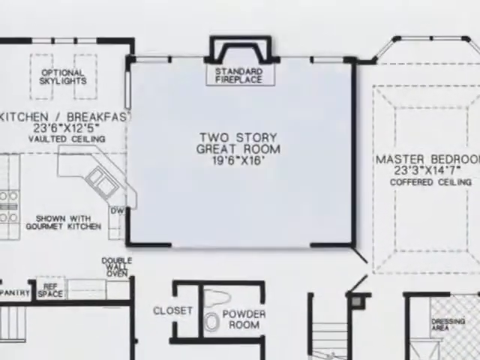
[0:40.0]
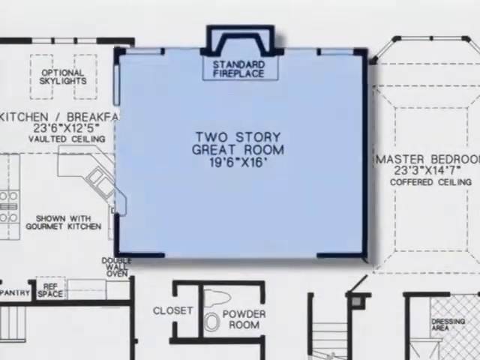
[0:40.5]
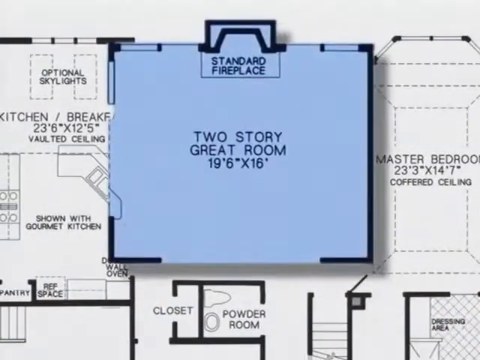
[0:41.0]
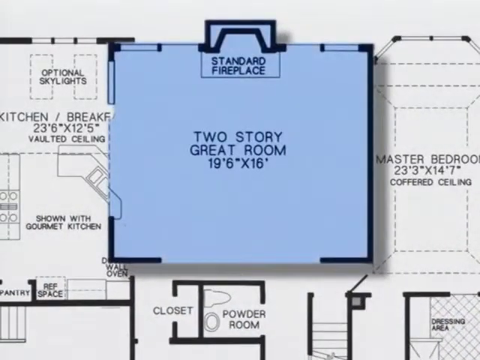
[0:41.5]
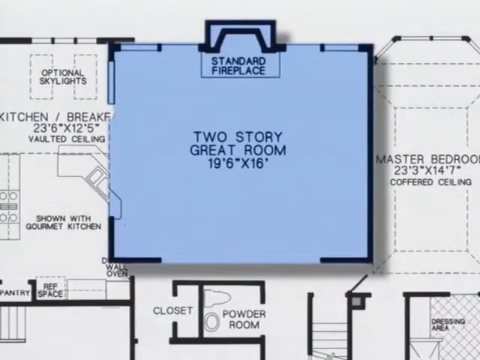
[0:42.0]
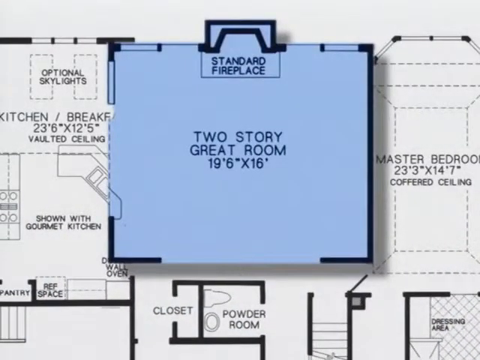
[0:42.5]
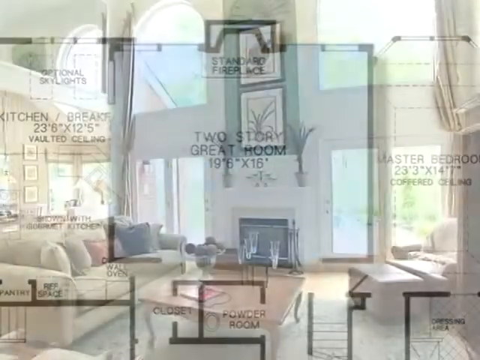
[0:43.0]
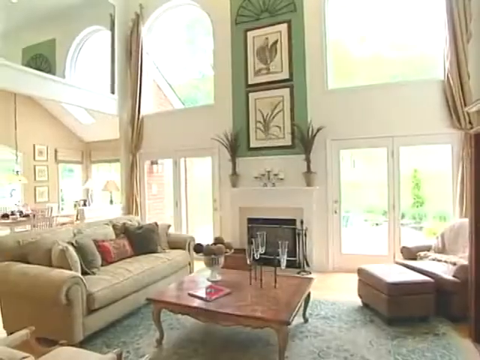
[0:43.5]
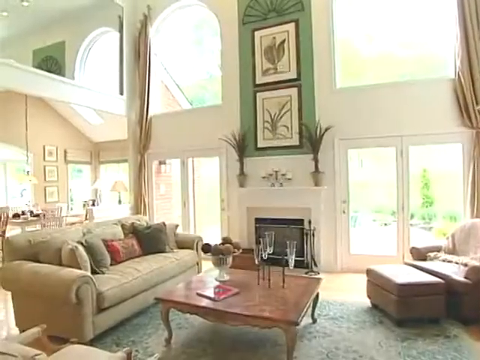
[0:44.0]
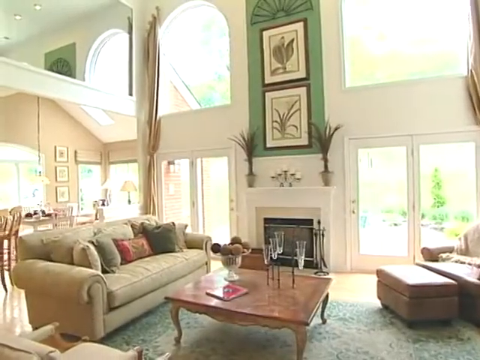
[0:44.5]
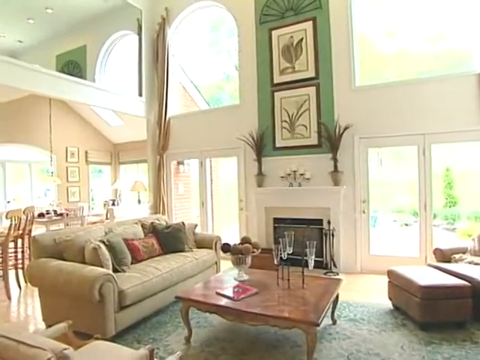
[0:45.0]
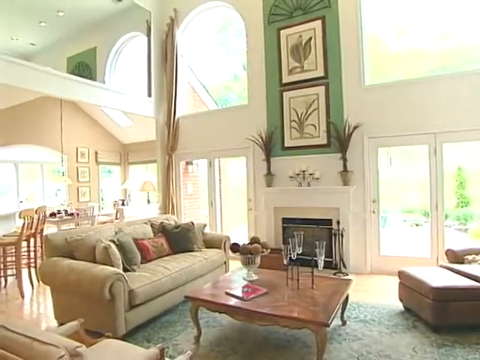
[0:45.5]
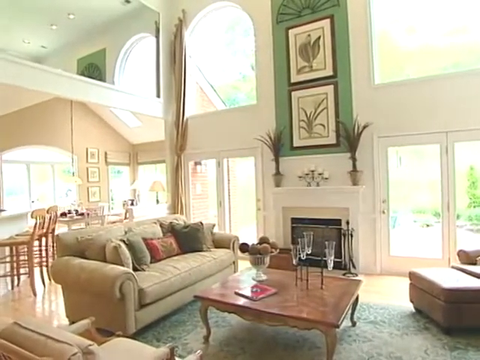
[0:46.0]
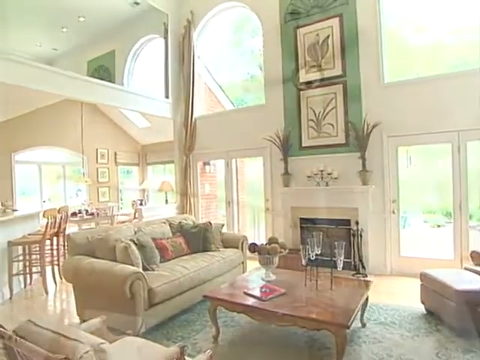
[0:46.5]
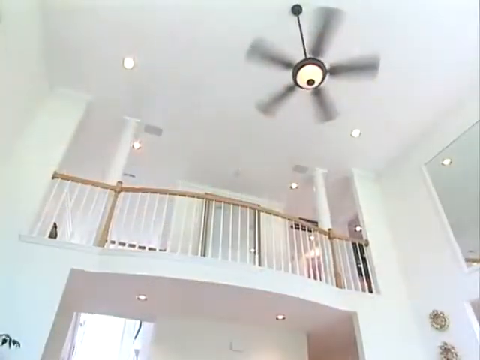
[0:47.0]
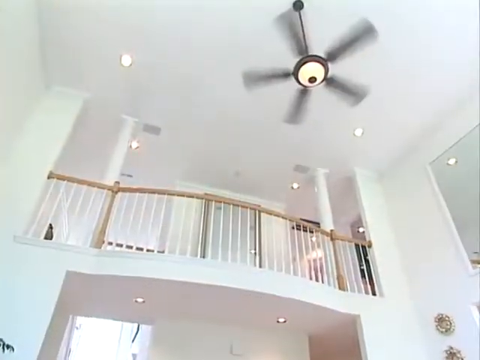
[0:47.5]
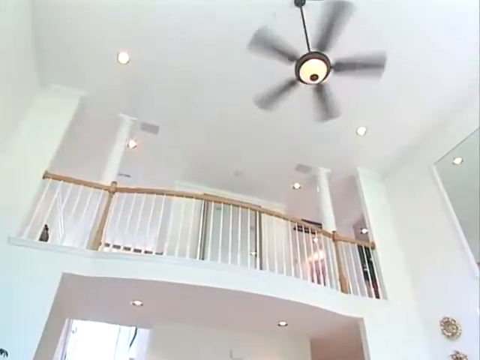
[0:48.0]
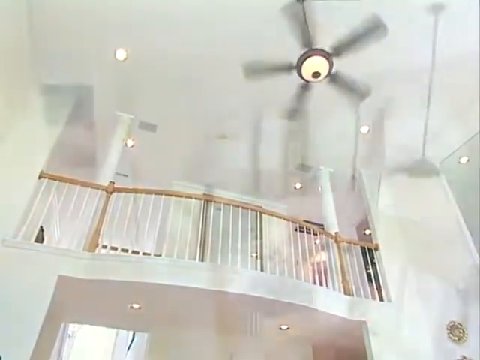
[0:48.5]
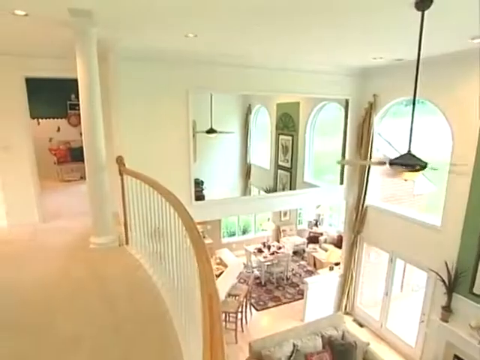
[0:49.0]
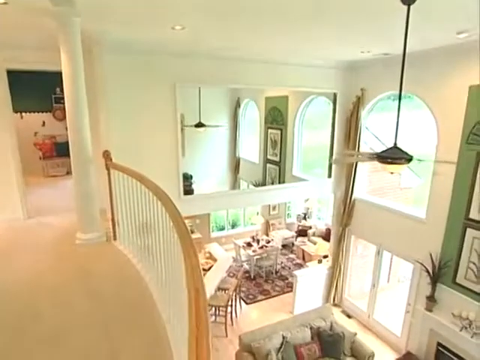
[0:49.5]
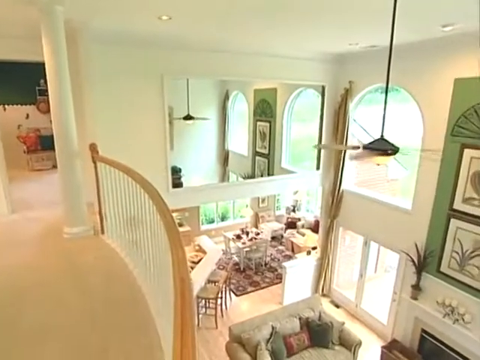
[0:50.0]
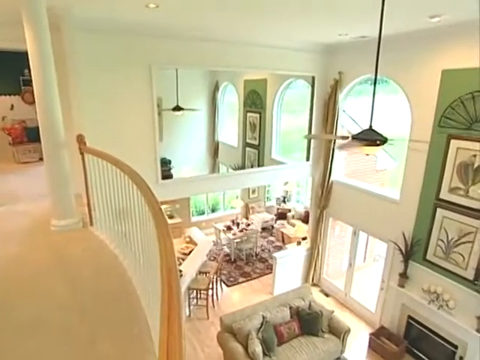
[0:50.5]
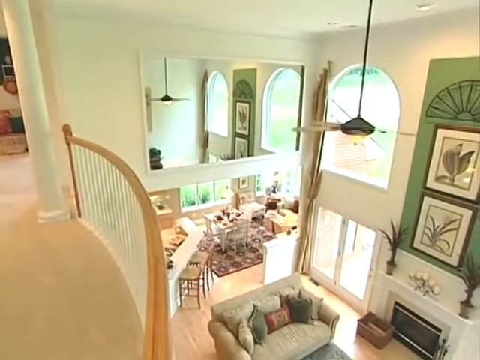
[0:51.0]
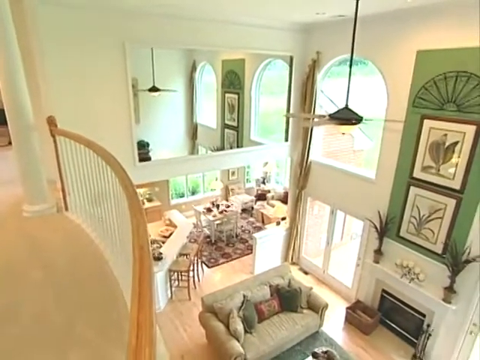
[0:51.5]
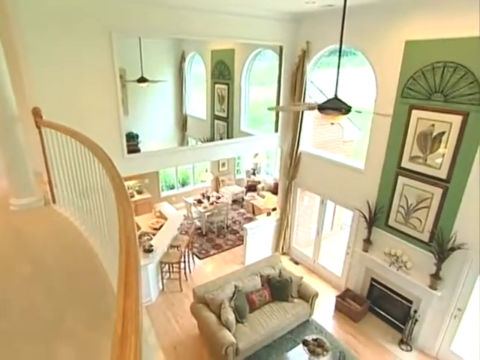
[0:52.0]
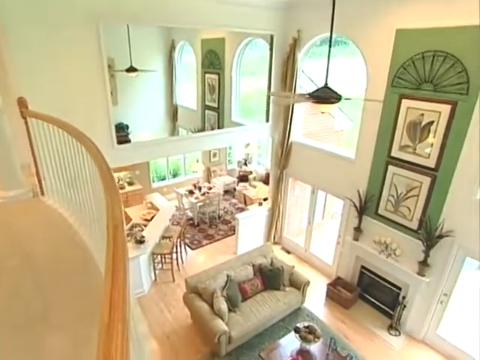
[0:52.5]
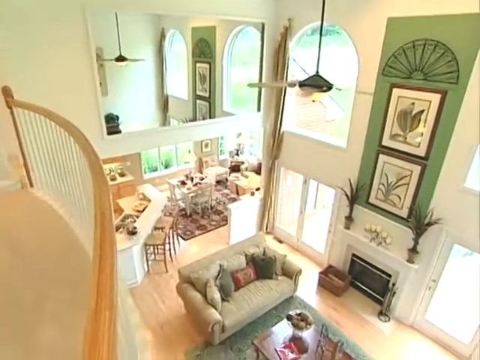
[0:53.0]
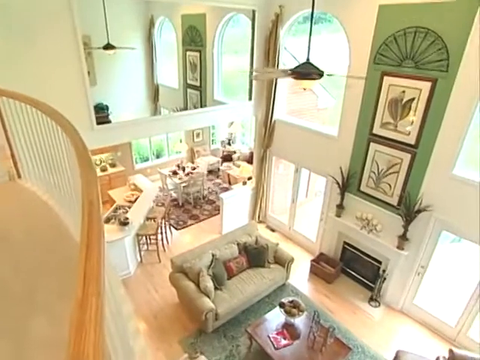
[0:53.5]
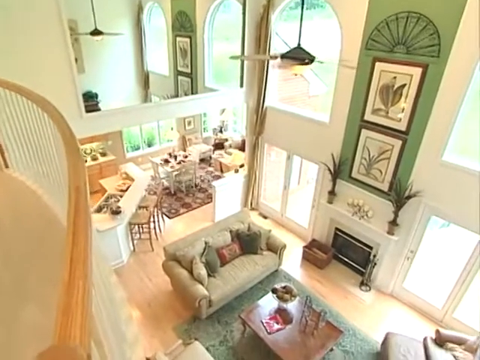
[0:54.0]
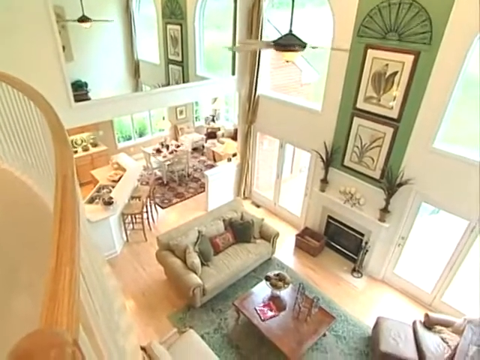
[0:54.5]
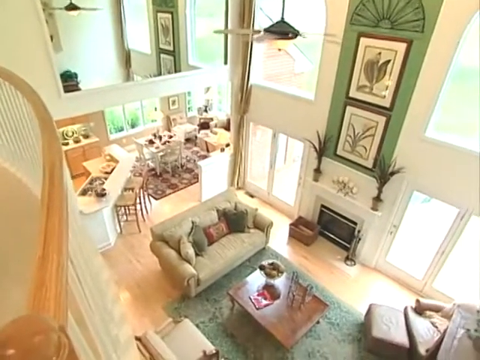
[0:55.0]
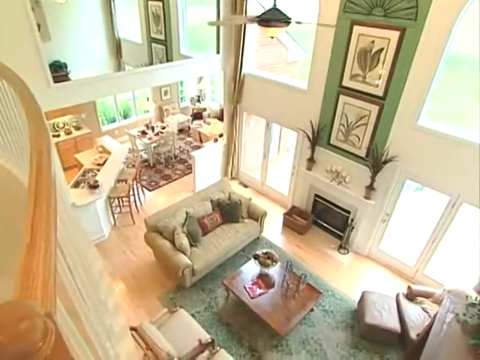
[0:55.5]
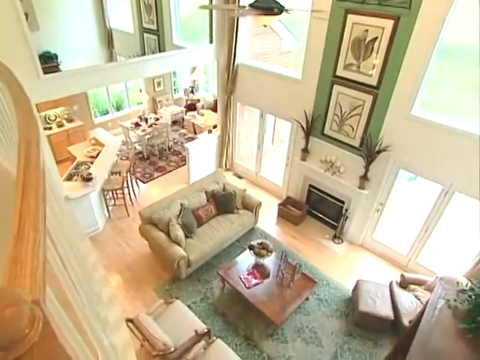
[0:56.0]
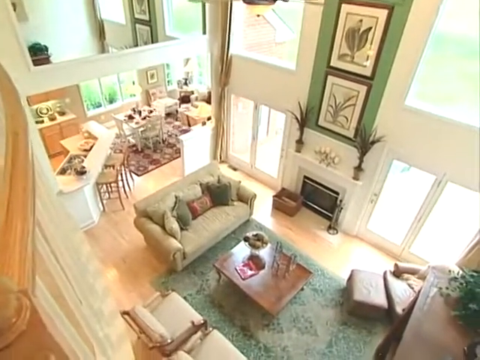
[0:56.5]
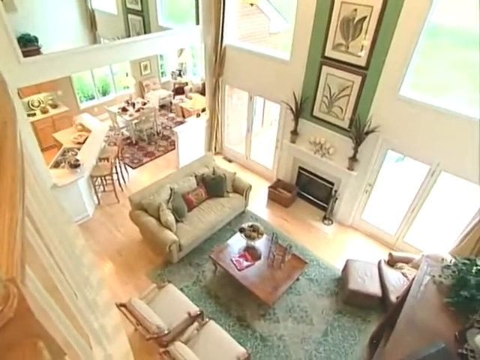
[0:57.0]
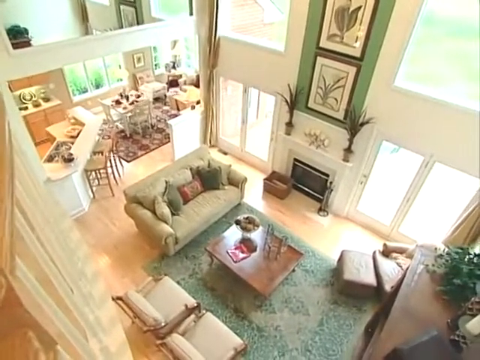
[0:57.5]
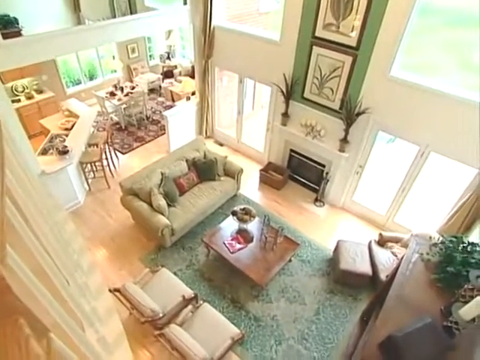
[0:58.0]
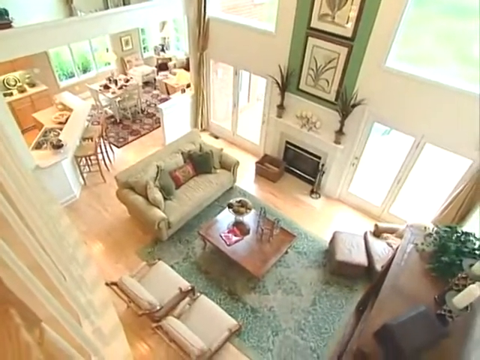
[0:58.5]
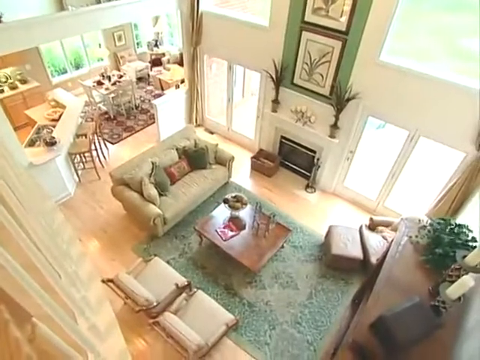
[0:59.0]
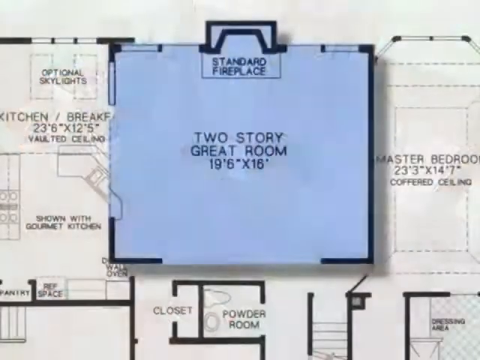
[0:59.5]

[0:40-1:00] Measurements of 19.6 inches by 16 inches are given, and there is a large standard fireplace in that room. The highlighted area enlarges further and turns darker blue. The video then moves to the room, which has large arched windows at the top with small bi-fold doors below each of them. There is an old looking green sofa and an old looking coffee table with various objects on top of it, and an old pinkish creamy looking sofa and footrest to the right. In the far distance are a lamp, a long light fitting and a few framed pictures. The shot moves further to the left to show some dining chairs, before switching to new footage focused on a ceiling fan and a baluster. The angle changes to show the ceiling fan from another view, apparently from the side of the balcony. From there the view looks down on the rooms below and also into a room on the top floor with dark green and white wallpaper or paint and a few objects on the left of the room. The camera fades down to show the old sofas.